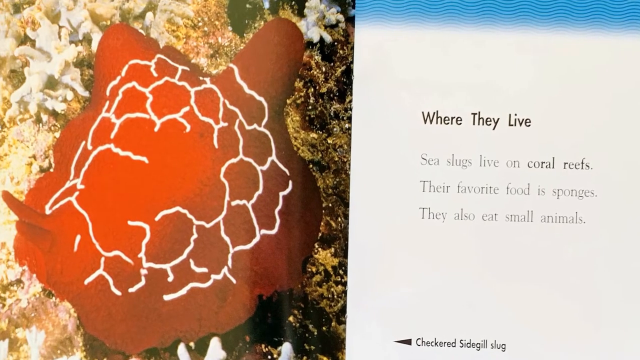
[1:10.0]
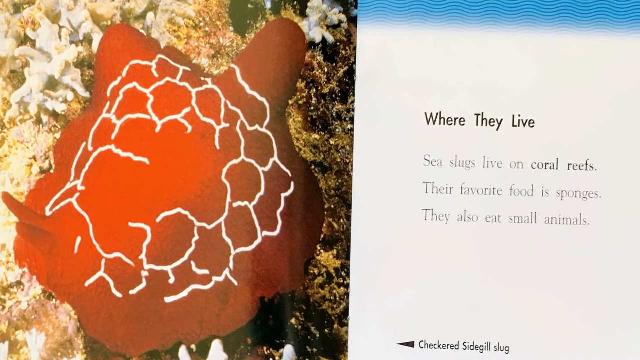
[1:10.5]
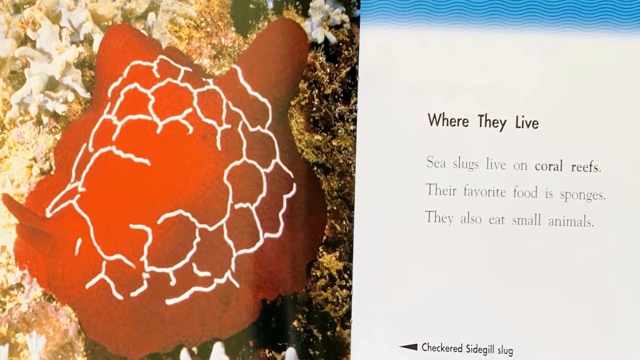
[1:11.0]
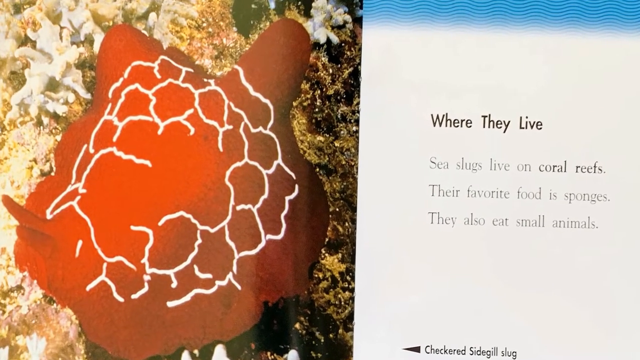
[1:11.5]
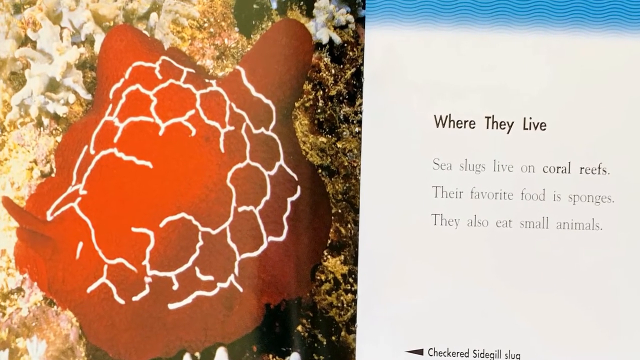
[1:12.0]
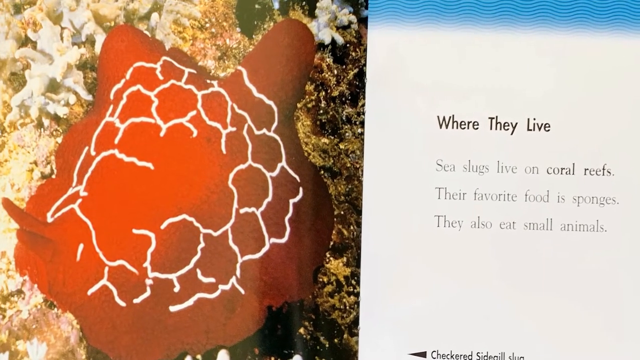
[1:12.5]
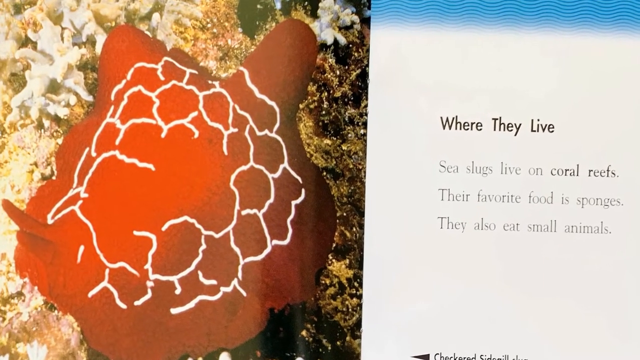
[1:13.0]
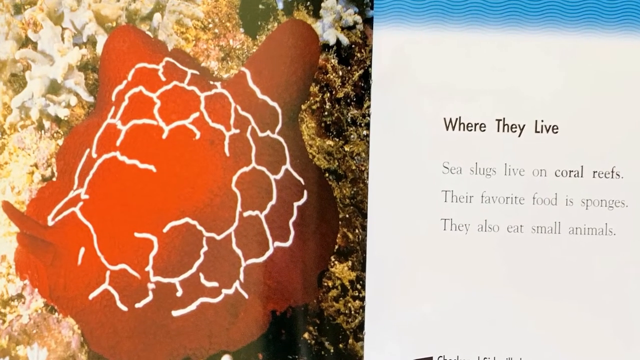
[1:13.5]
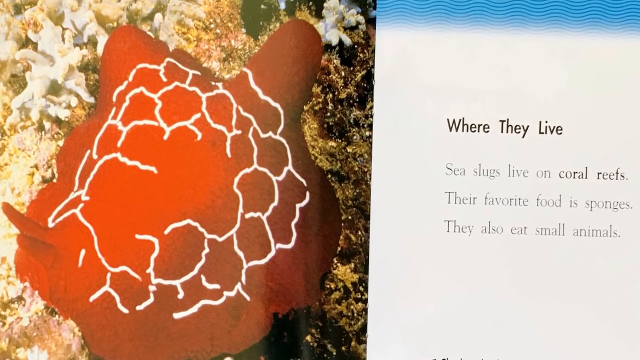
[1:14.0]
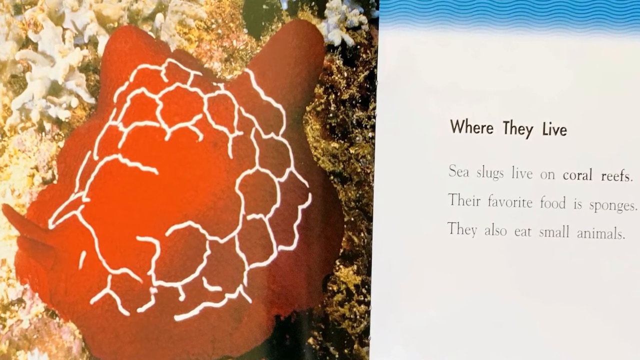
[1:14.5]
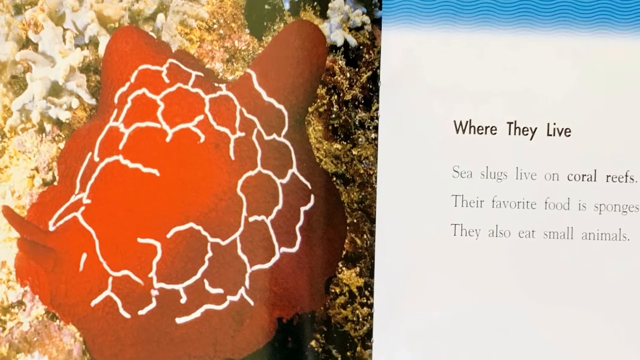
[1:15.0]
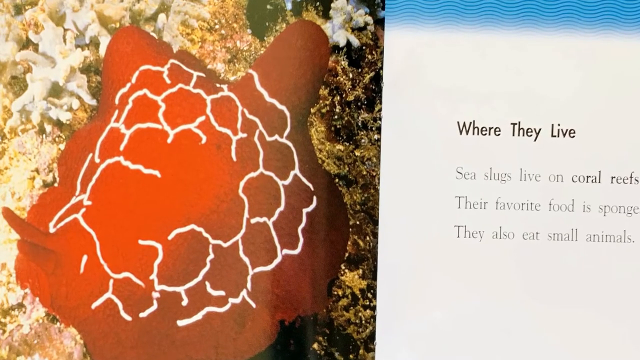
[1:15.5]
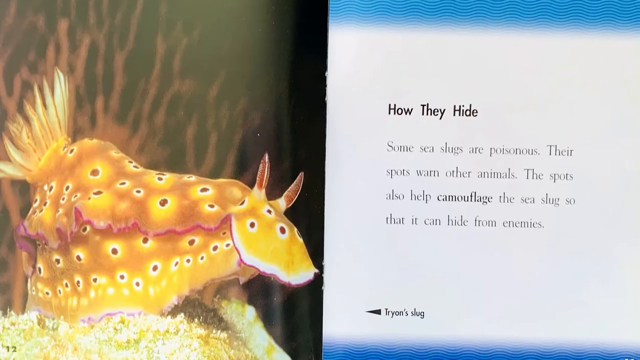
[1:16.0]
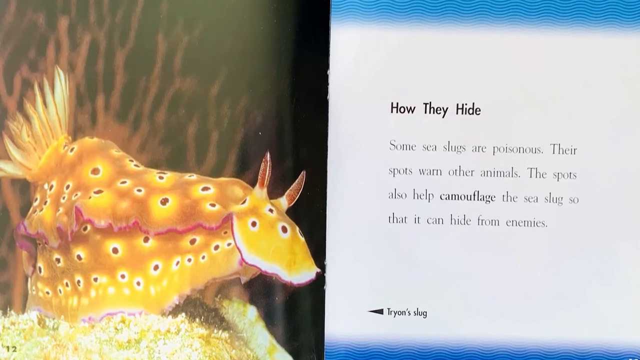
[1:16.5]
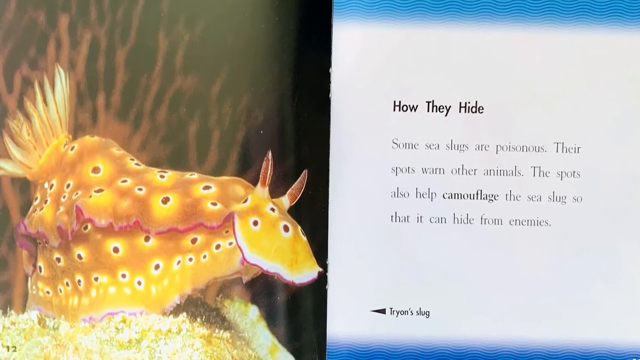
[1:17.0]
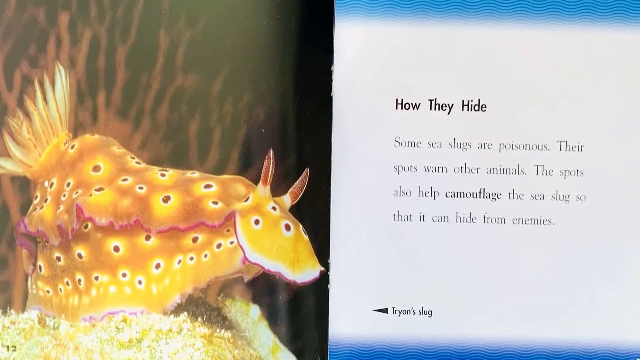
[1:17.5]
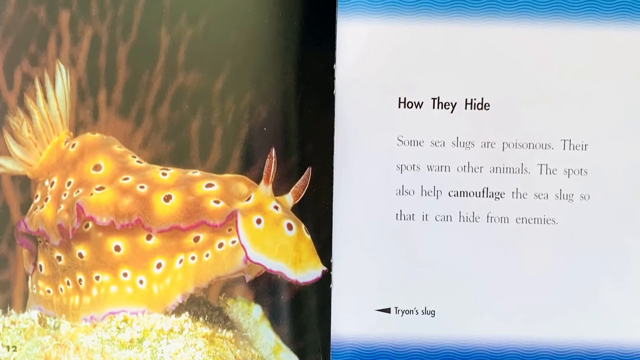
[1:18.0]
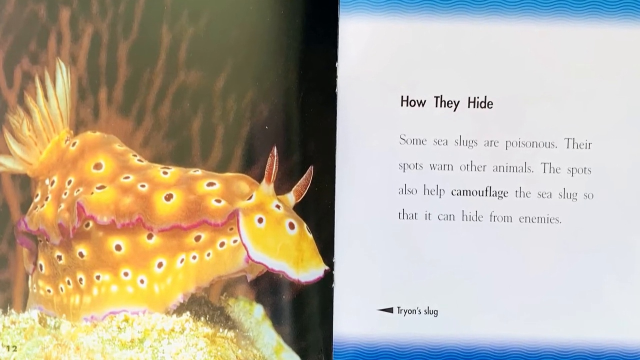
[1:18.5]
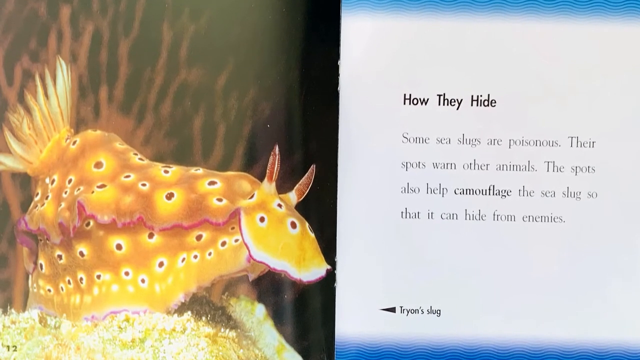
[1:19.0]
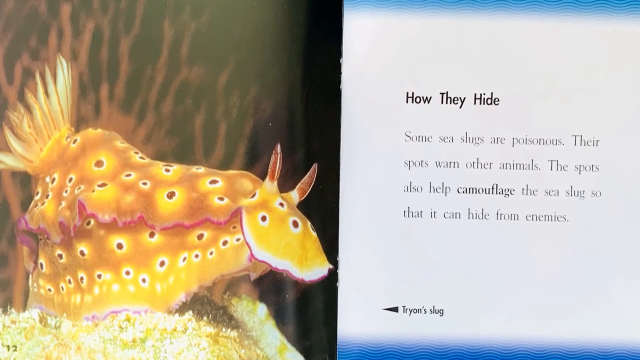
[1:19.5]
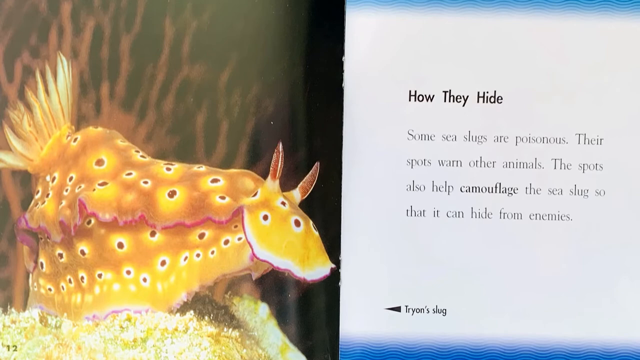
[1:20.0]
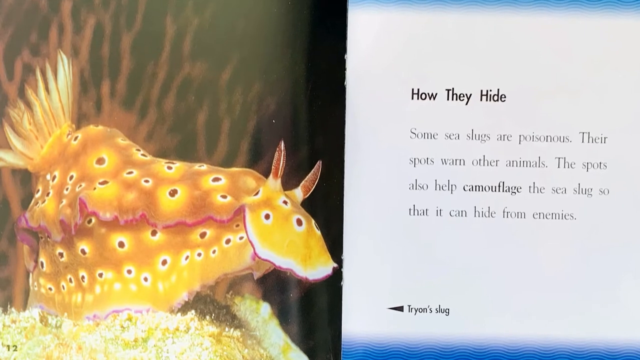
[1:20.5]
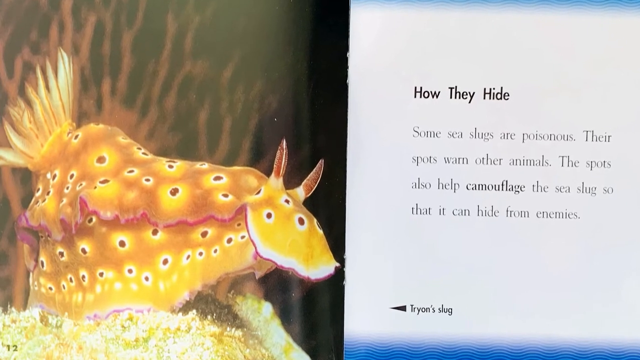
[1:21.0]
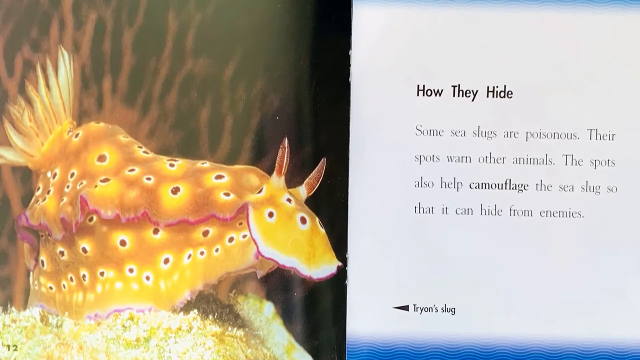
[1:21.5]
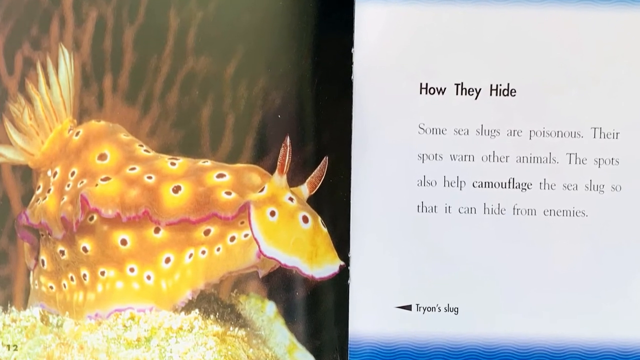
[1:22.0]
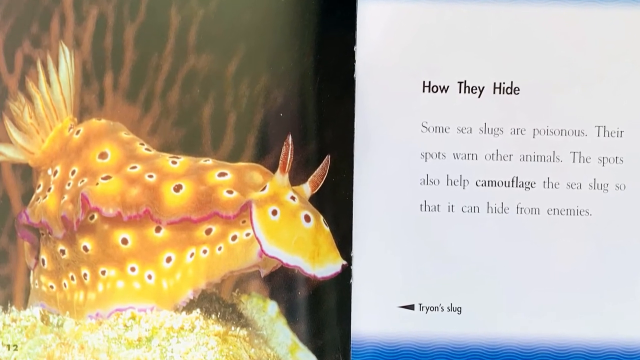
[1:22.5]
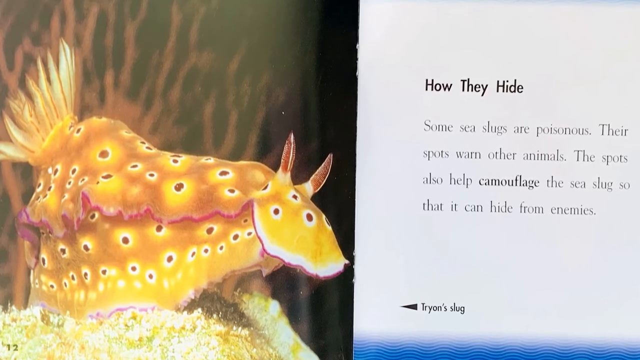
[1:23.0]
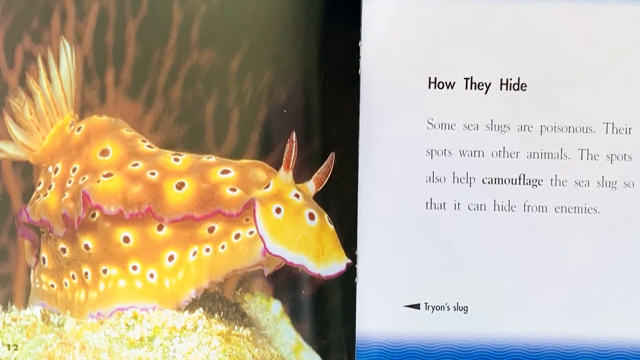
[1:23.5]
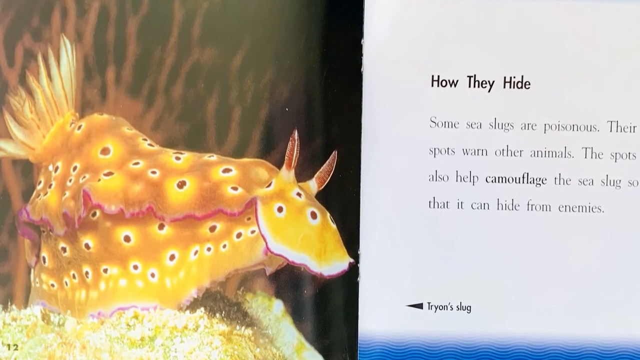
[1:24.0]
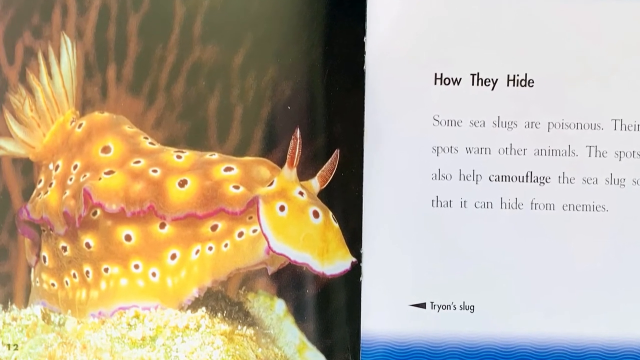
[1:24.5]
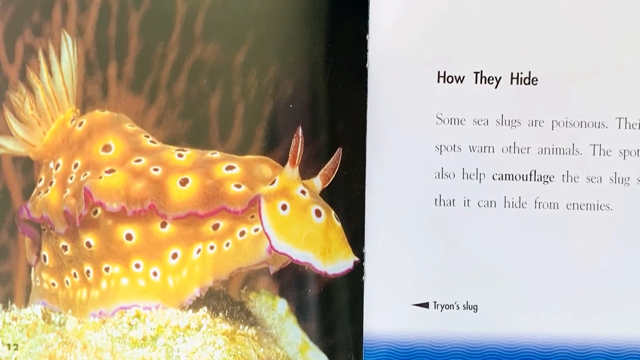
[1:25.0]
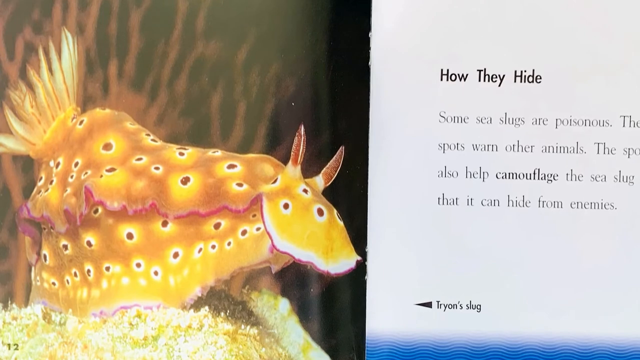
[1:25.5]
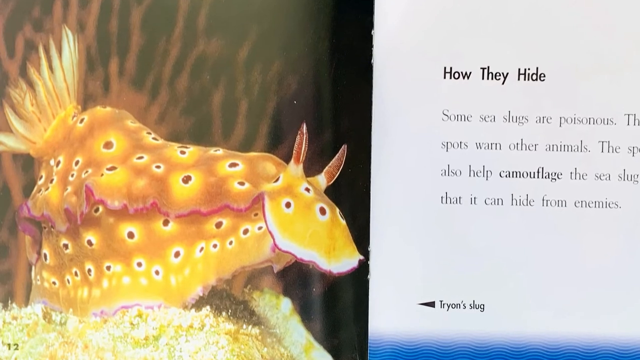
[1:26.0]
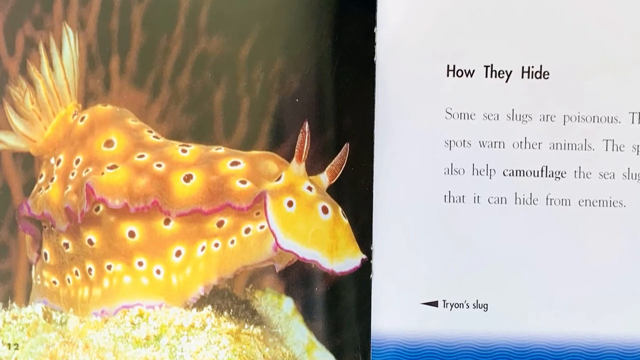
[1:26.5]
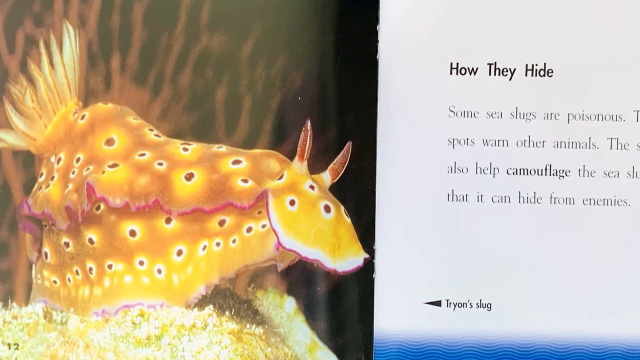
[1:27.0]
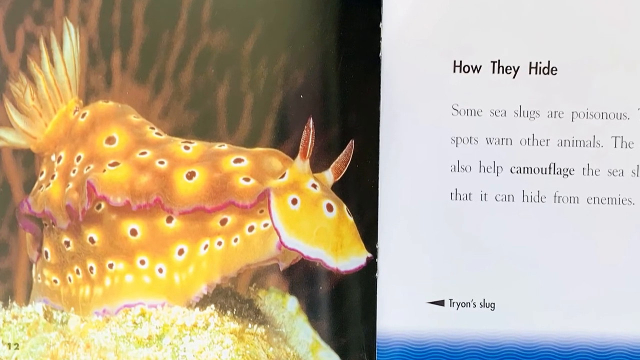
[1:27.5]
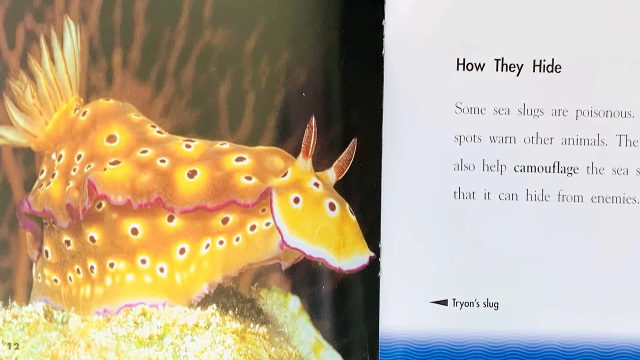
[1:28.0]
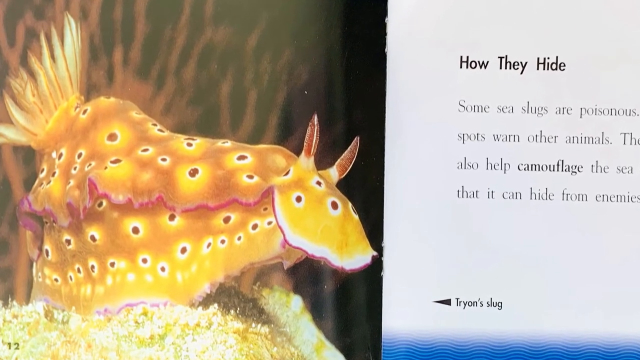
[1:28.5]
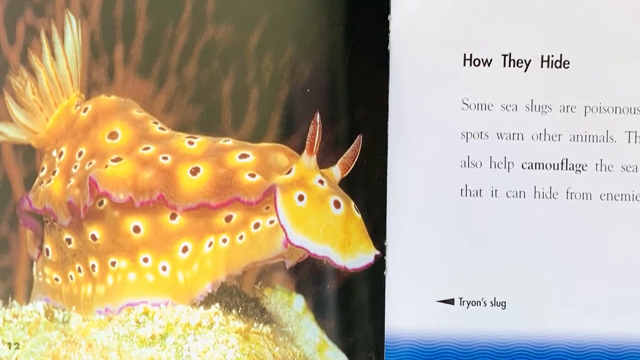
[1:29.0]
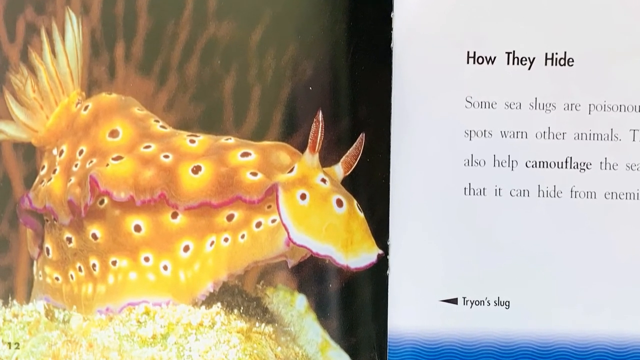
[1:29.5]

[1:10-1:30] A side-by-side spread shows, on the right, a white page with the bold black heading "where they live" at the top and beneath it "sea slugs live on coral reefs. Their favorite food is sponges. They also eat small animals." At the bottom left of the page, a black arrowhead points to the left, next to the label "checkered sidegill slug." On the left is an image of a large, round, blob-shaped, reddish-brown slug with jagged white lines on its back that form various circular shapes. The slug sits on dark yellow-looking coral. The view zooms in on the picture on the left. The screen then changes to another spread. On the right, a white page has the bold black heading "how they hide" and beneath it "some sea slugs are poisonous. Their spots warn other animals. The spots also help camouflage the sea slug so that it can hide from enemies." At the bottom left of the page, a black arrowhead points to the left, next to the label "Tryon's slug." On the left is a picture of a large yellow slug that appears to have bright yellow spots on its body with small dark red spots inside them, two red antennae on its head, and a tail that looks like small, long, skinny tails bunched together. It appears to be at the bottom of the ocean, with yellow coral underneath it and light brown coral branches behind it.